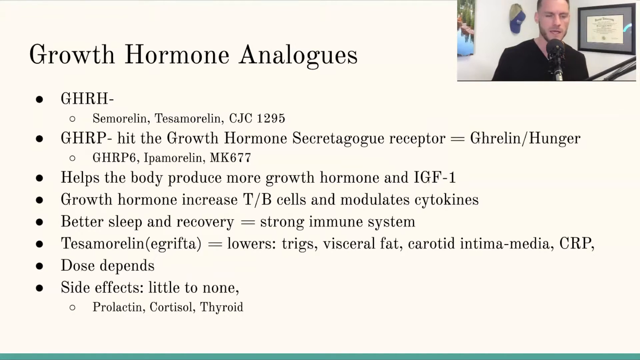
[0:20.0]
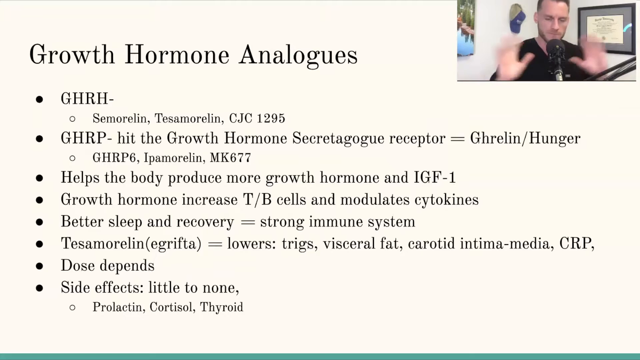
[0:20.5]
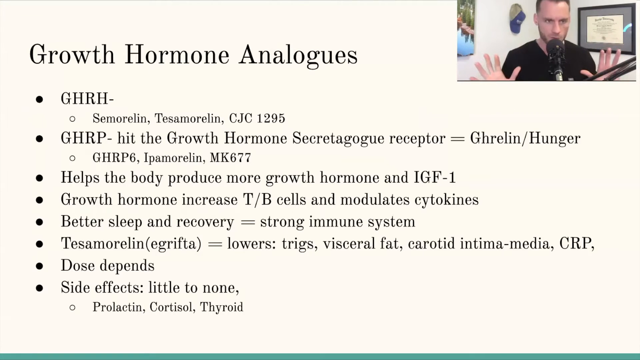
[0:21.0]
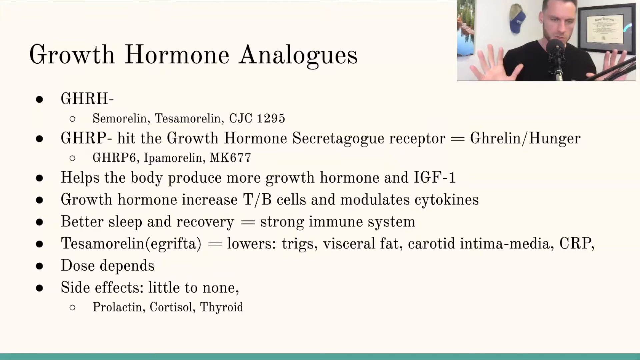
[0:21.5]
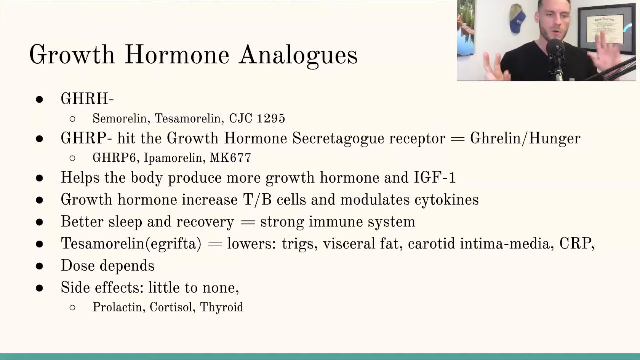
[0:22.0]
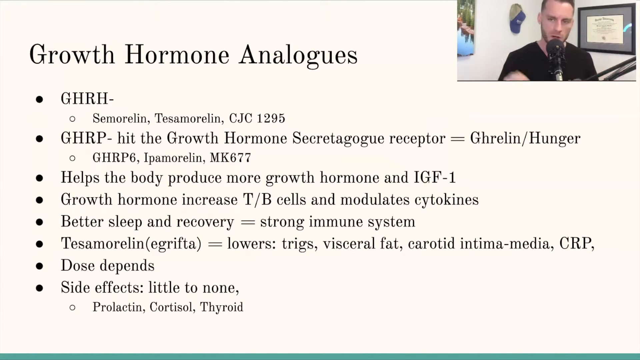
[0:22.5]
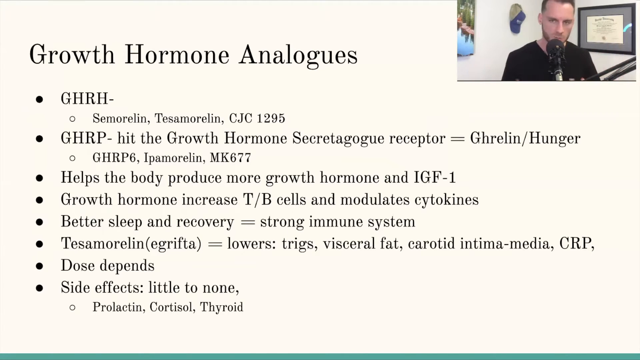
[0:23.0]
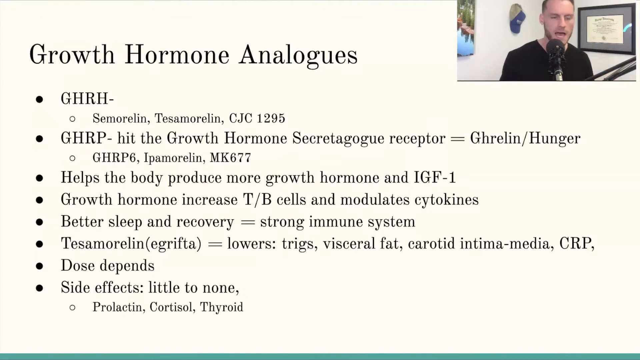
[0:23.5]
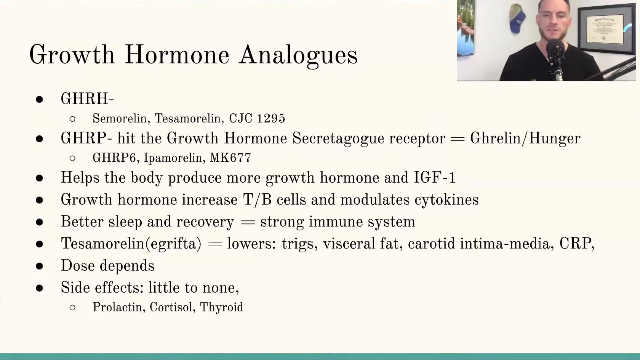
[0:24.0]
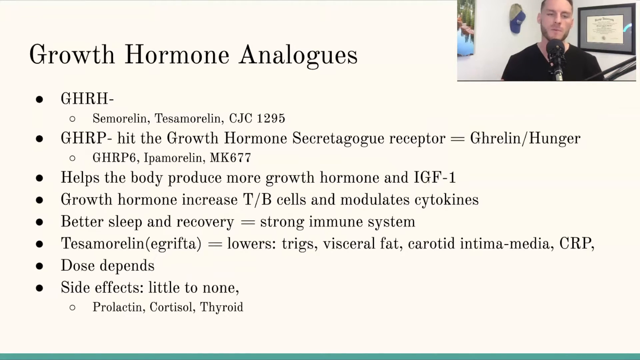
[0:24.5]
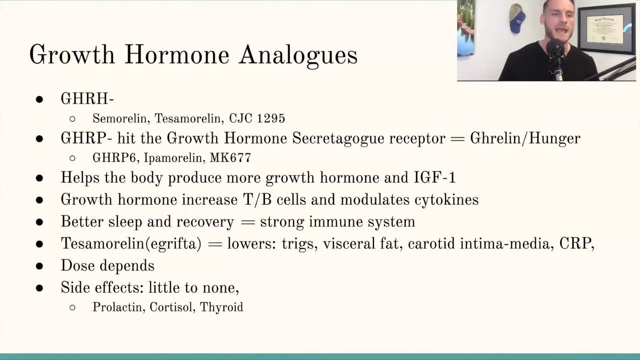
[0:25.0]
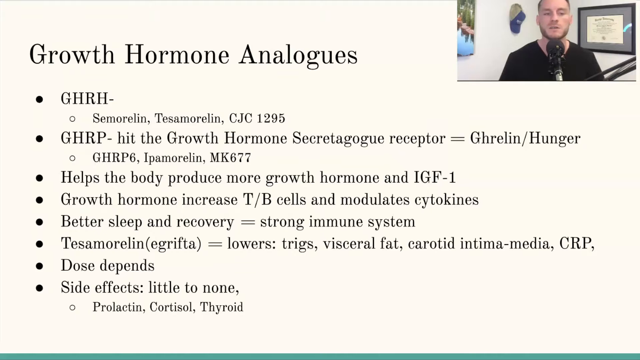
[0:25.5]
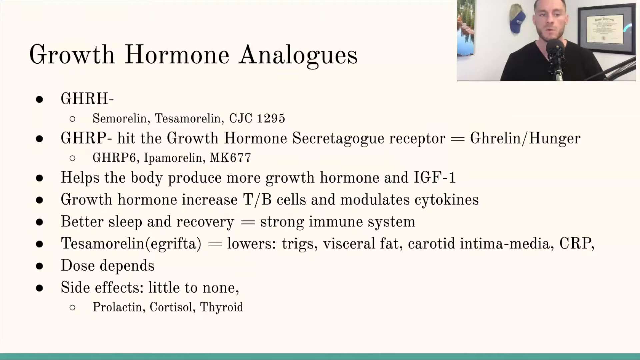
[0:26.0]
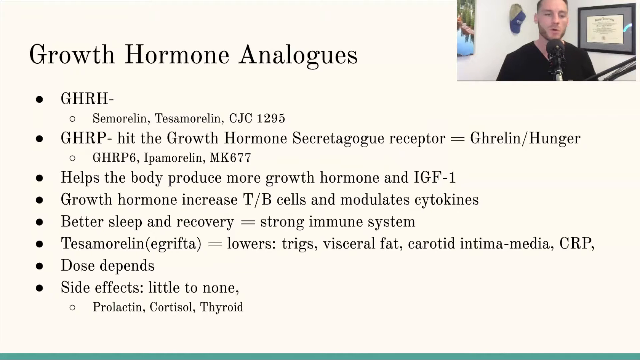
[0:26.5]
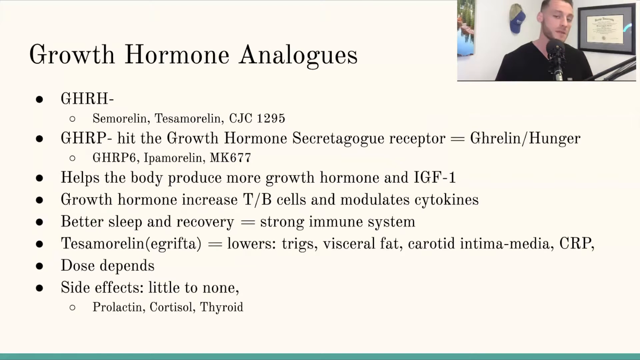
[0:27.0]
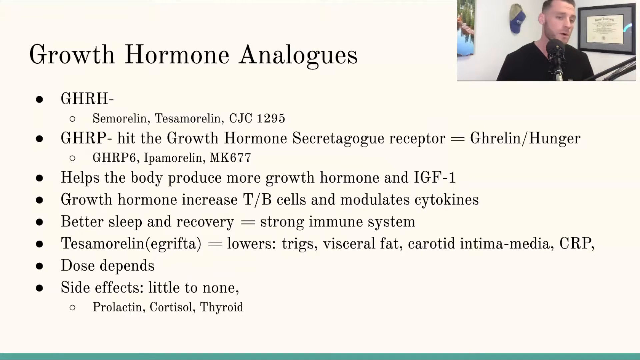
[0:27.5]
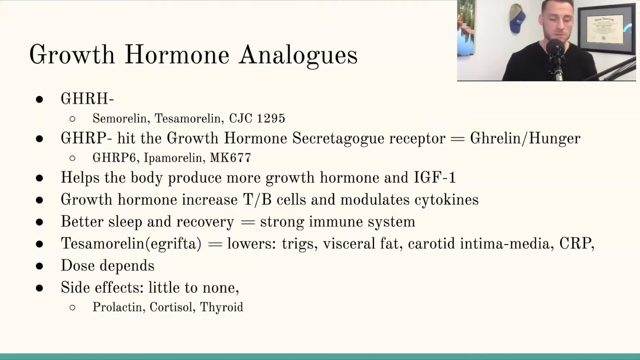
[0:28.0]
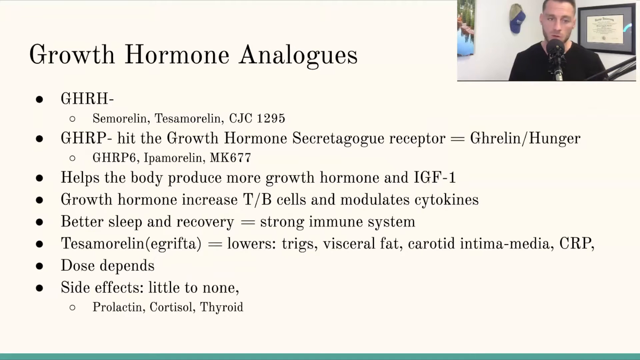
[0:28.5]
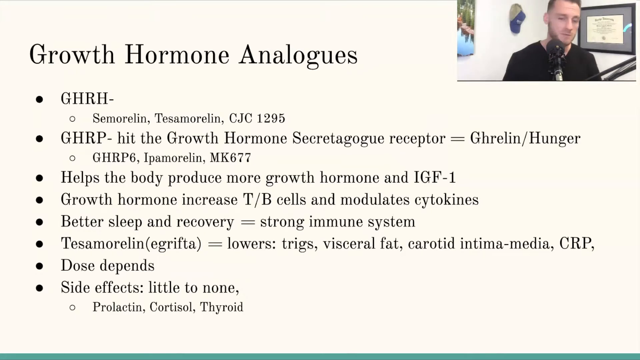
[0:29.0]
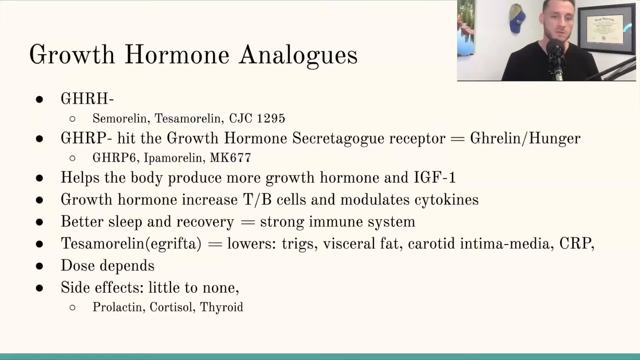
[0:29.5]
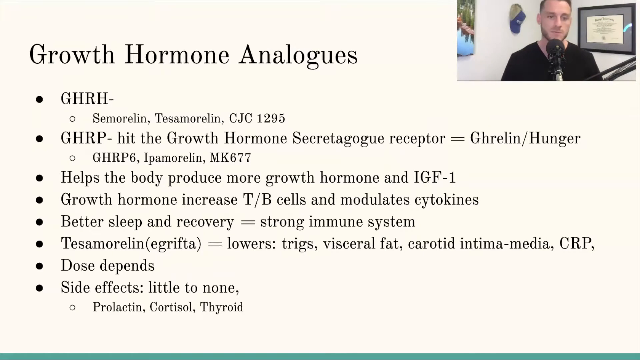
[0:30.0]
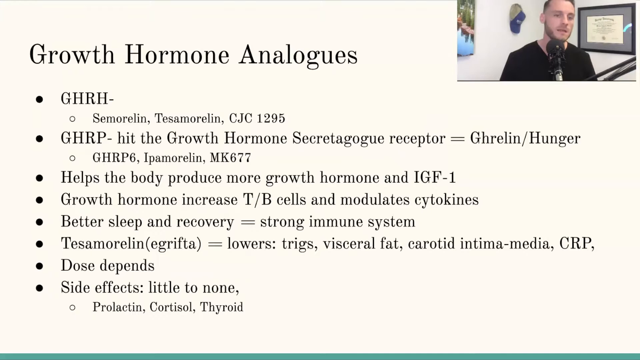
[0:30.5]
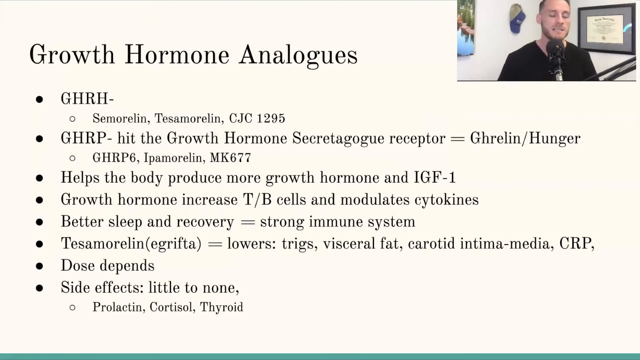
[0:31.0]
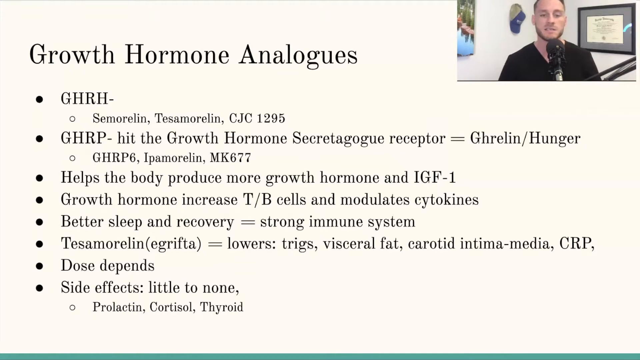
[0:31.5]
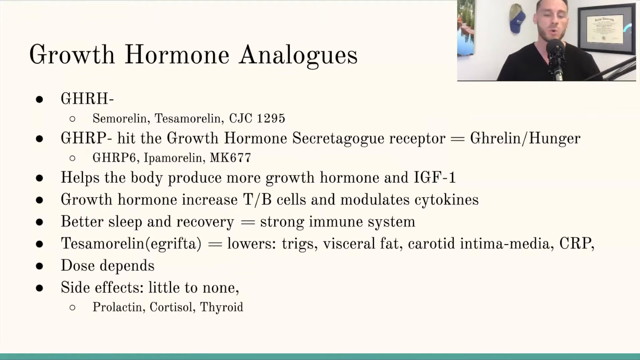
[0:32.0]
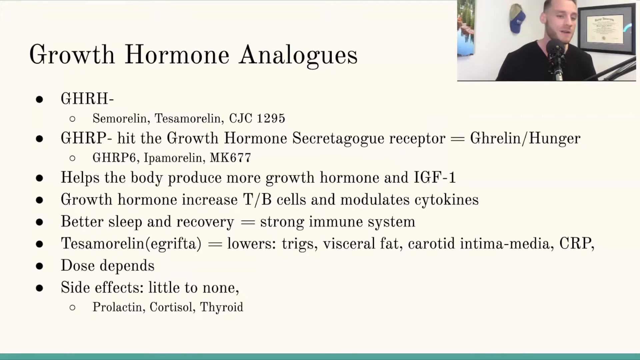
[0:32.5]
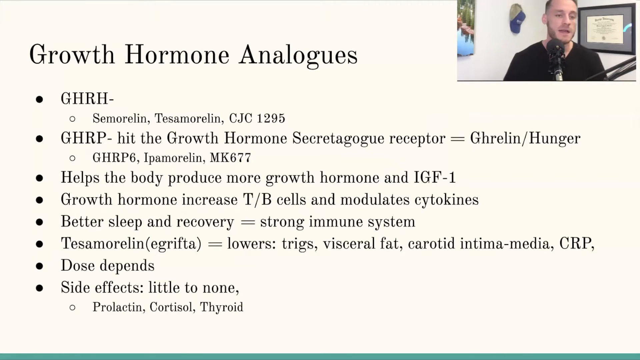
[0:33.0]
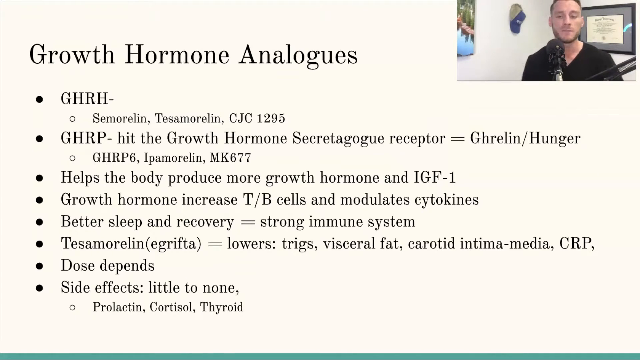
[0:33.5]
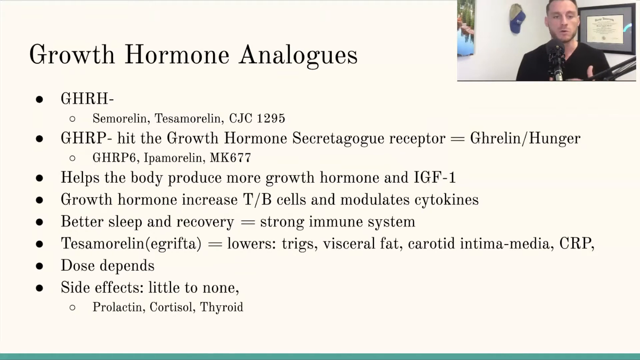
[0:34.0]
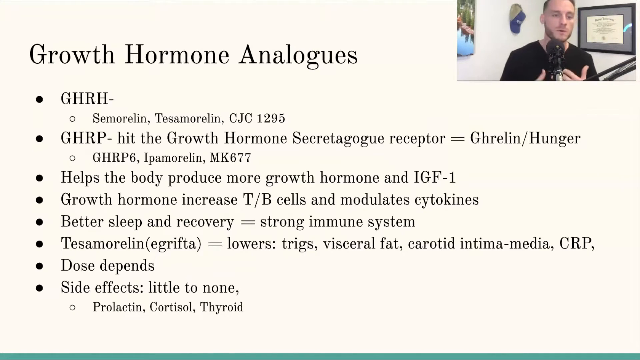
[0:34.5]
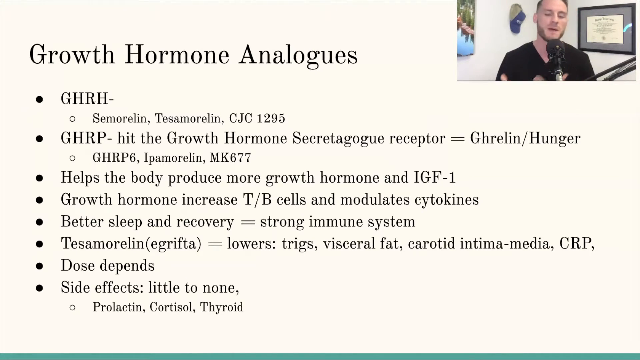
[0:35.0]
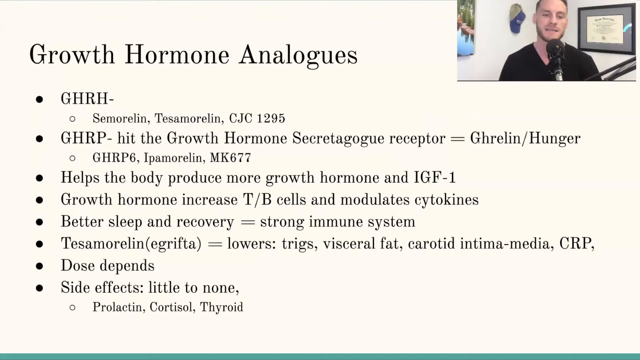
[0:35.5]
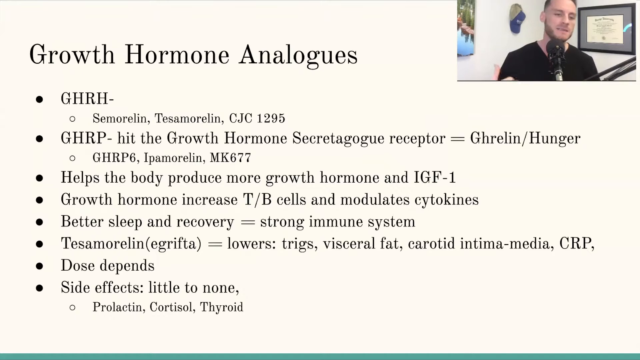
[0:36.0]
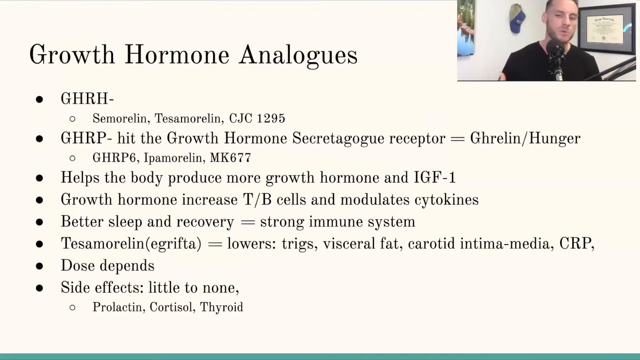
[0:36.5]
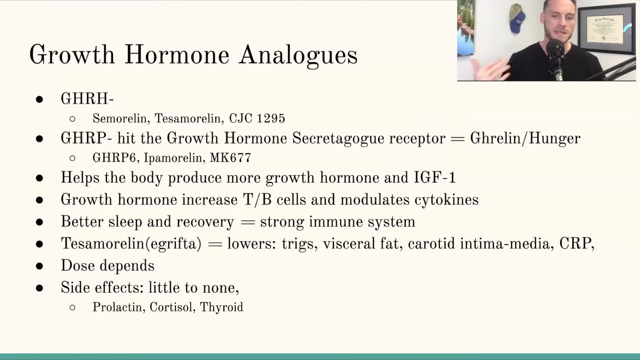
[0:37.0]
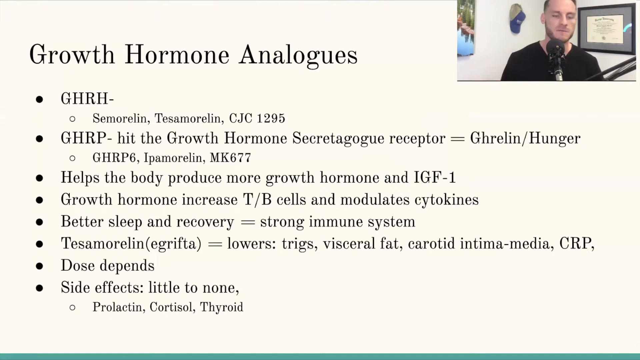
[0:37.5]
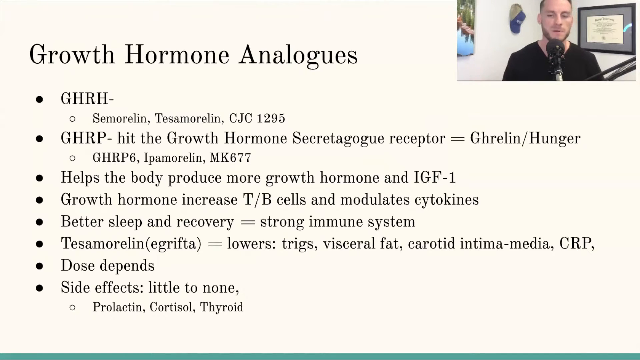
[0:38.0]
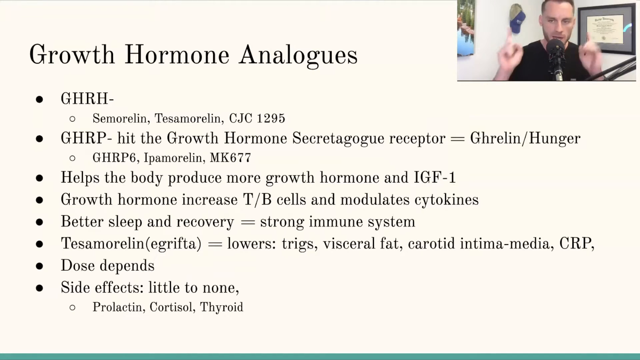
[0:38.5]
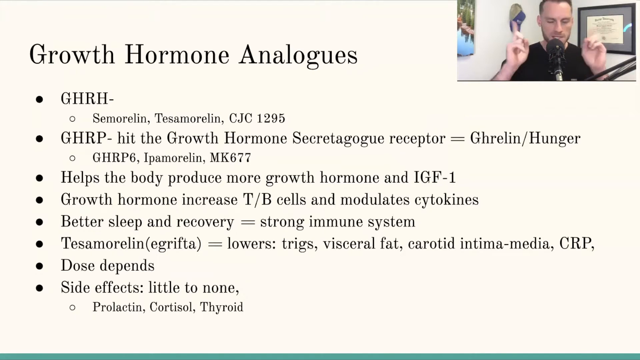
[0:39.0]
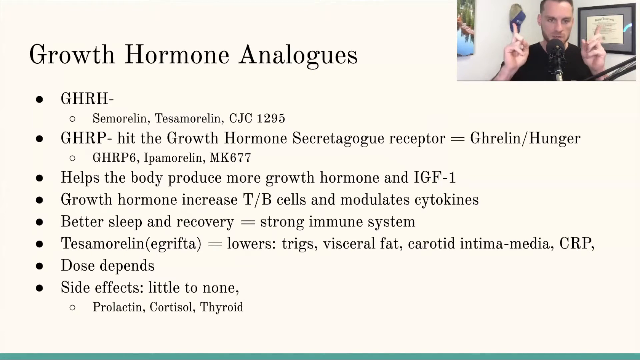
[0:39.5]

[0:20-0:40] The next slide has bullet points about growth hormone analogues, with abbreviations and terms such as "GHRH", "simalin", "tesamalin" and "CJC1295". It also gives vague dose information, reading "dose depends" and "side effects little to none". No links to sources or research appear on the slide. The man remains in the top right corner, talking.